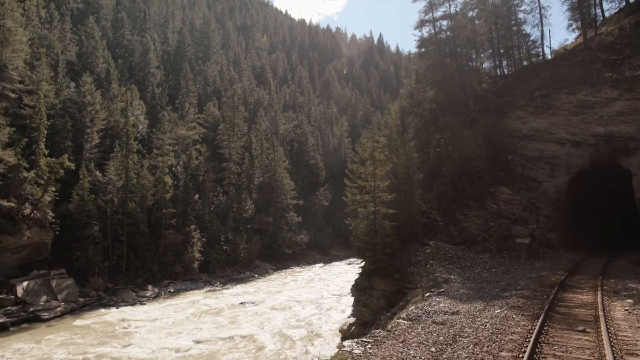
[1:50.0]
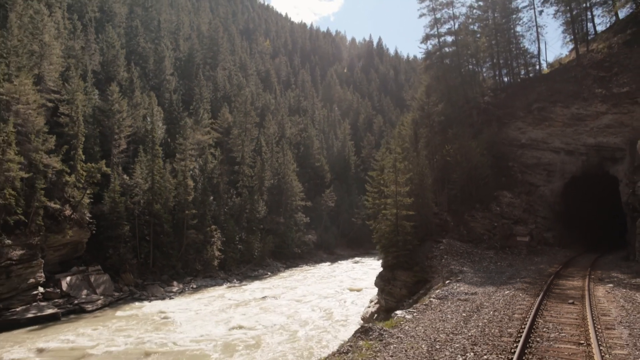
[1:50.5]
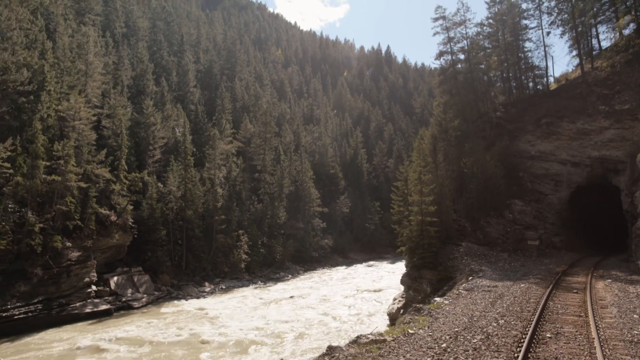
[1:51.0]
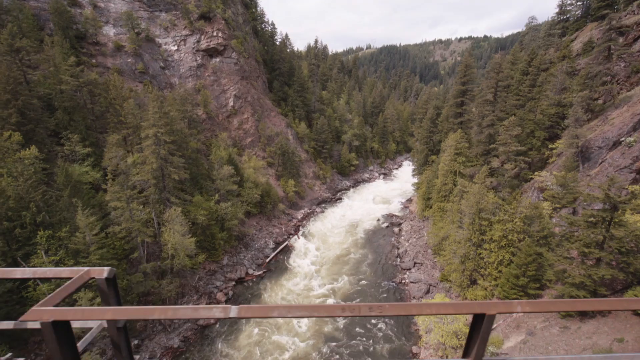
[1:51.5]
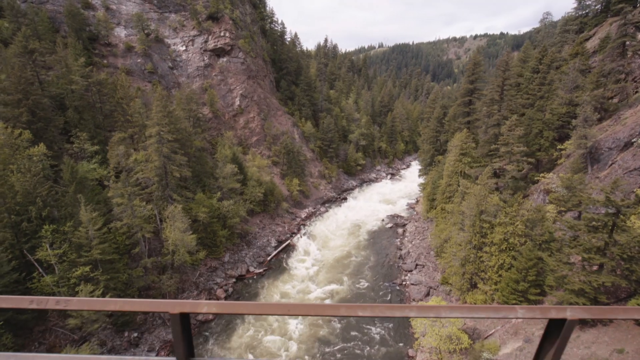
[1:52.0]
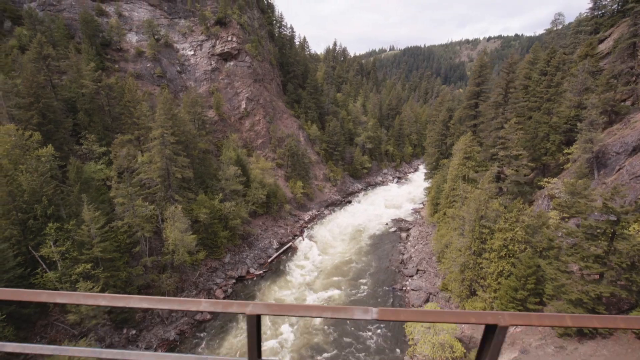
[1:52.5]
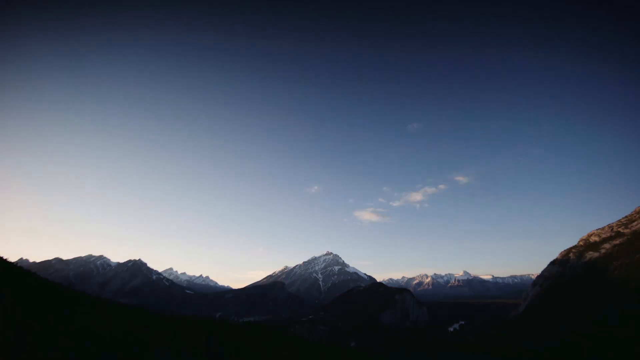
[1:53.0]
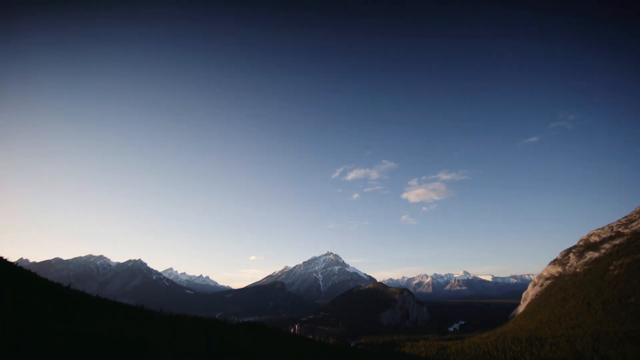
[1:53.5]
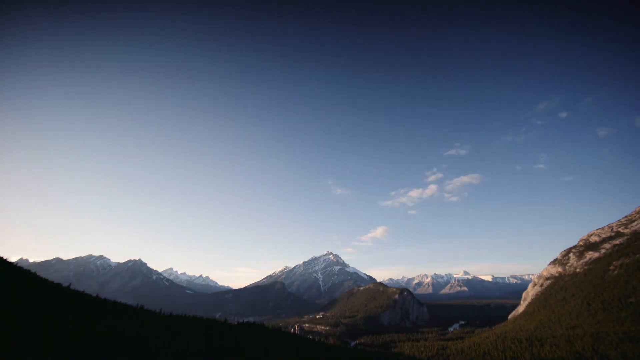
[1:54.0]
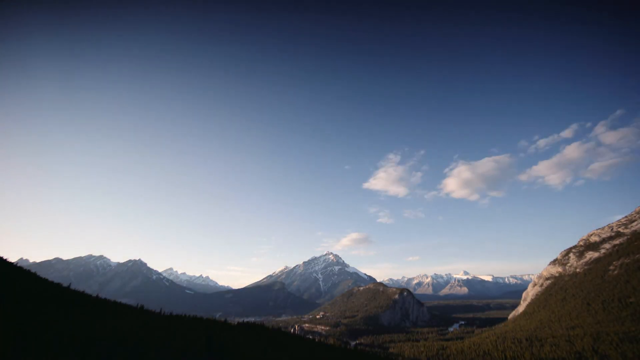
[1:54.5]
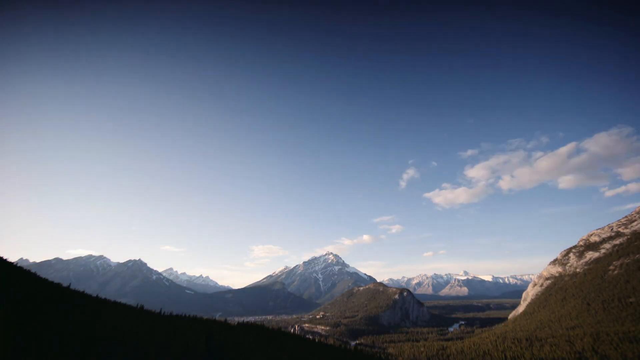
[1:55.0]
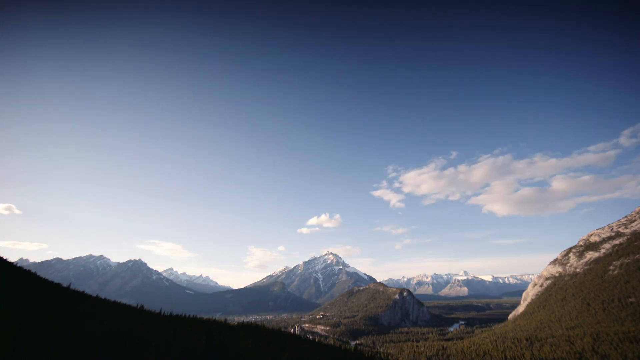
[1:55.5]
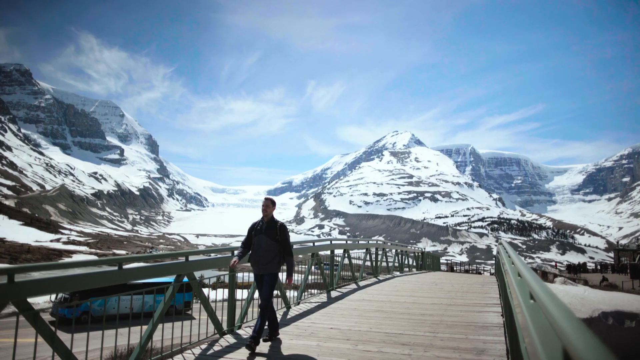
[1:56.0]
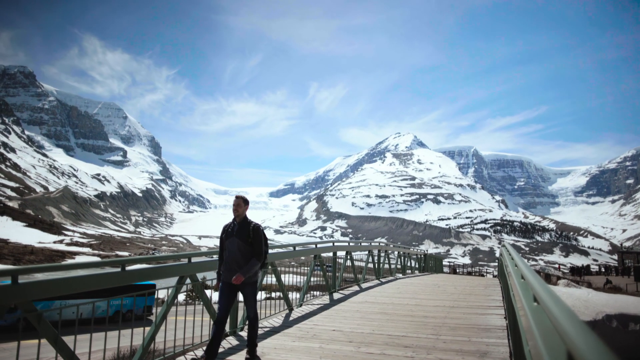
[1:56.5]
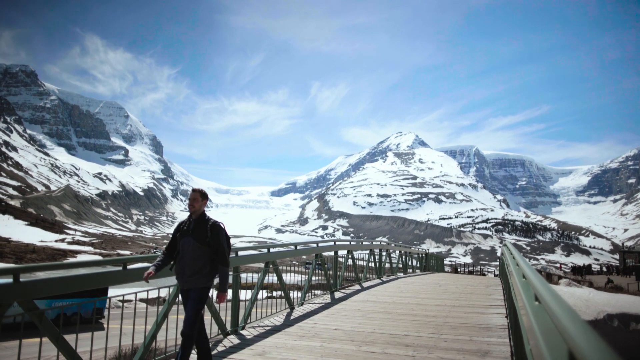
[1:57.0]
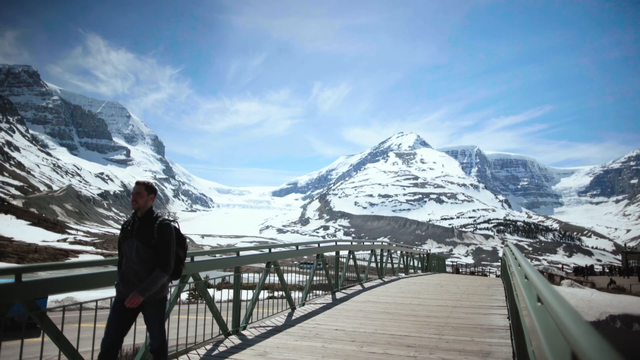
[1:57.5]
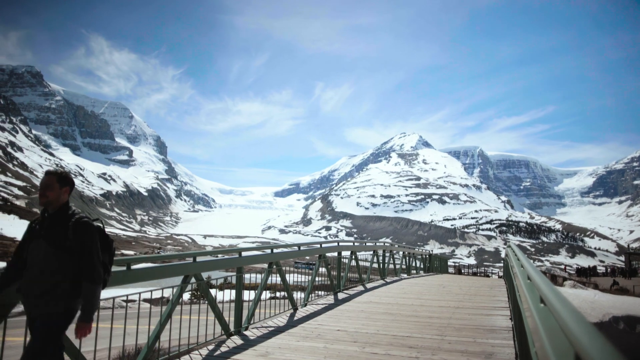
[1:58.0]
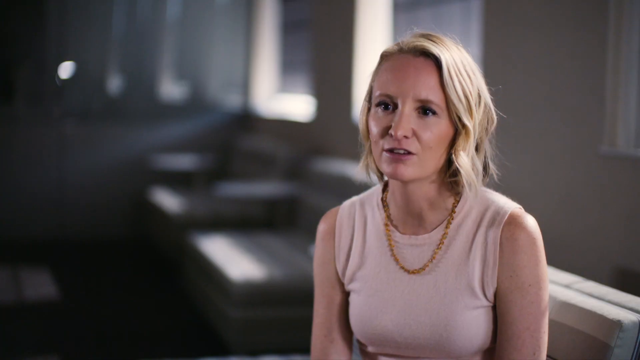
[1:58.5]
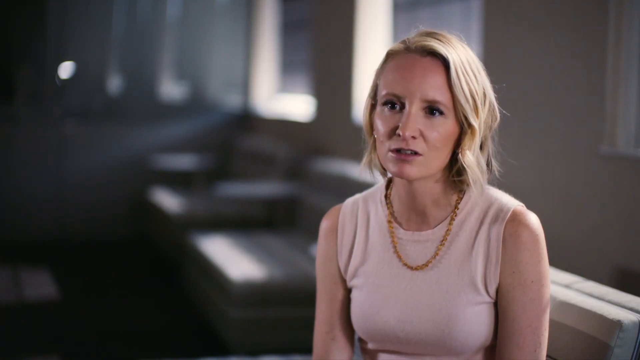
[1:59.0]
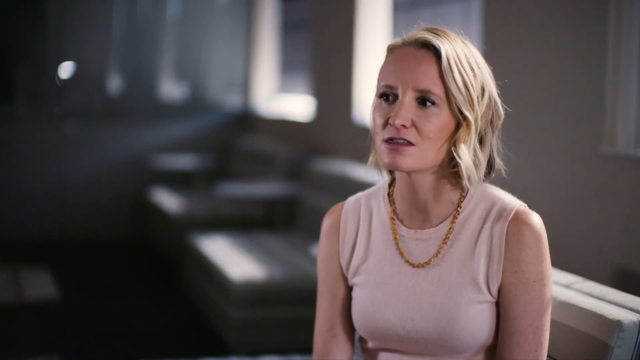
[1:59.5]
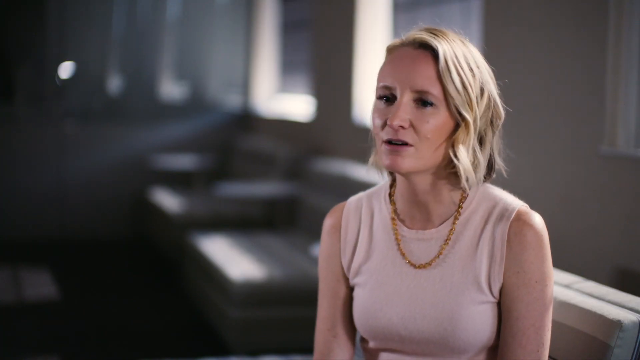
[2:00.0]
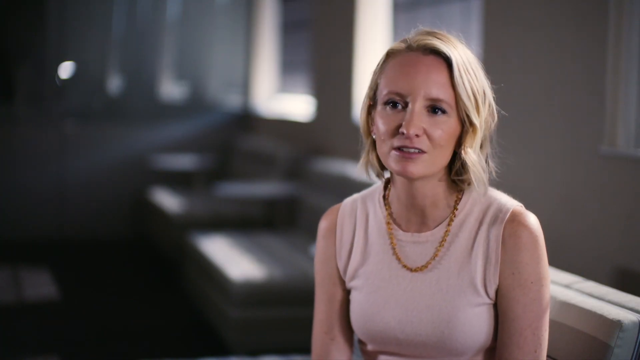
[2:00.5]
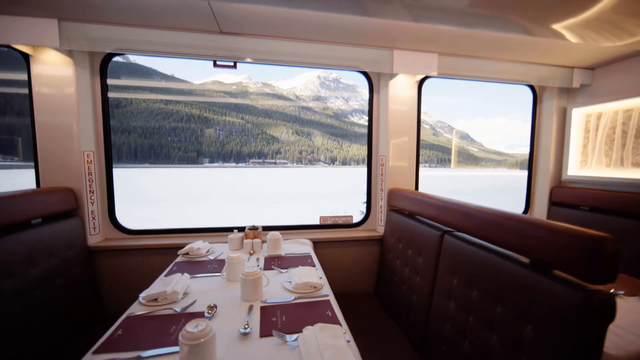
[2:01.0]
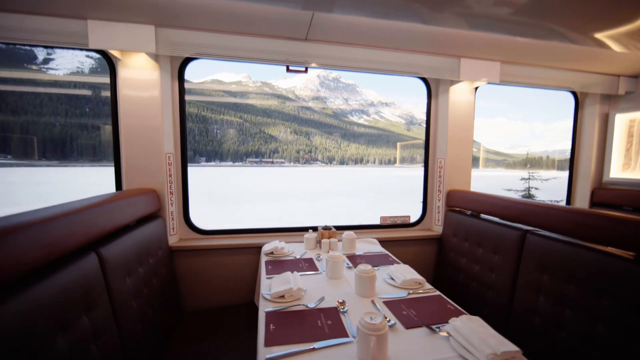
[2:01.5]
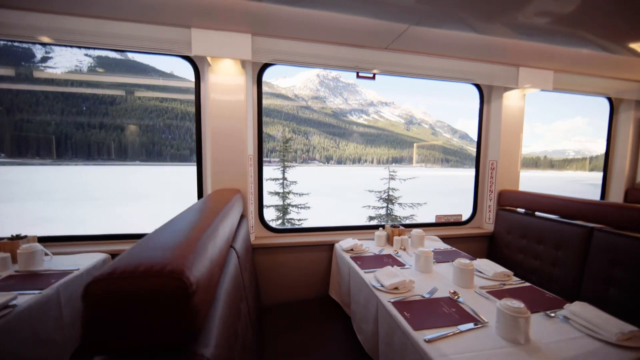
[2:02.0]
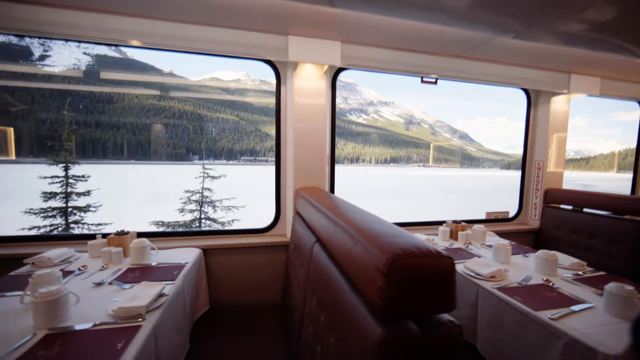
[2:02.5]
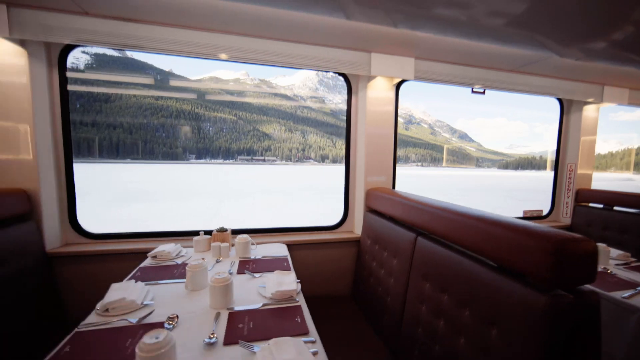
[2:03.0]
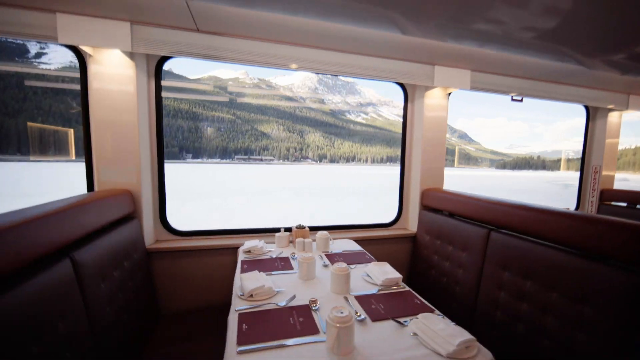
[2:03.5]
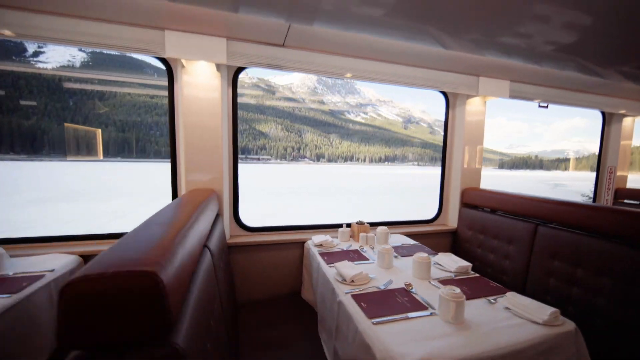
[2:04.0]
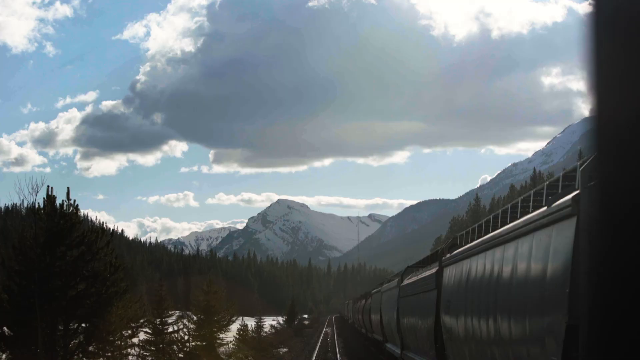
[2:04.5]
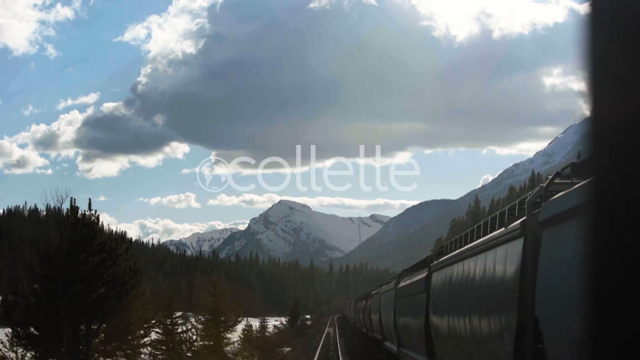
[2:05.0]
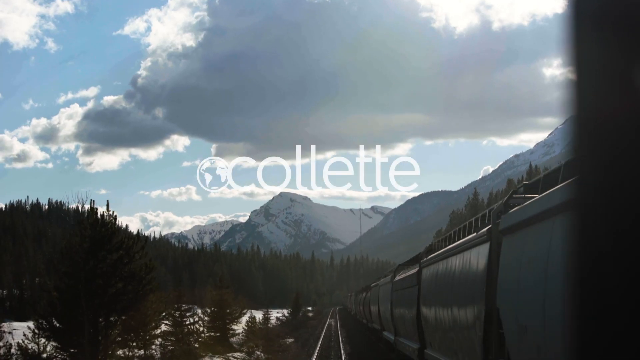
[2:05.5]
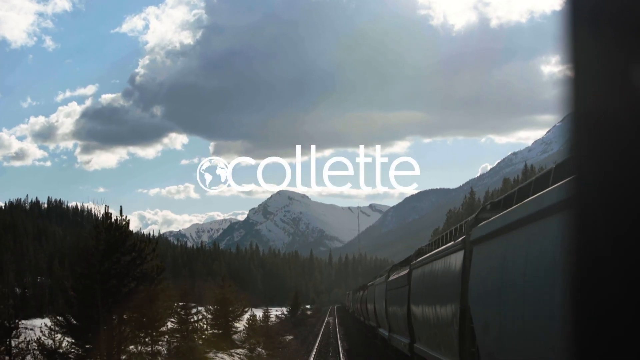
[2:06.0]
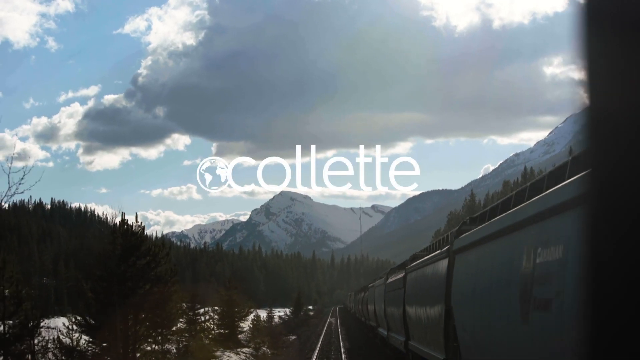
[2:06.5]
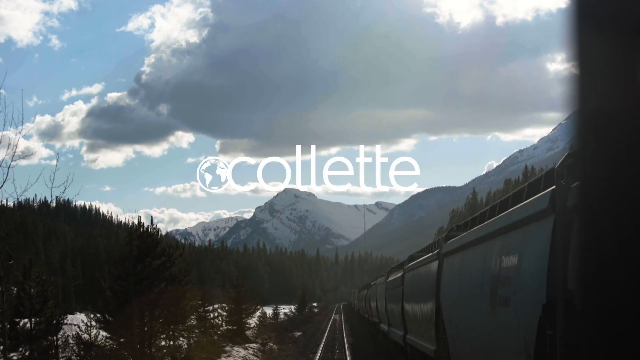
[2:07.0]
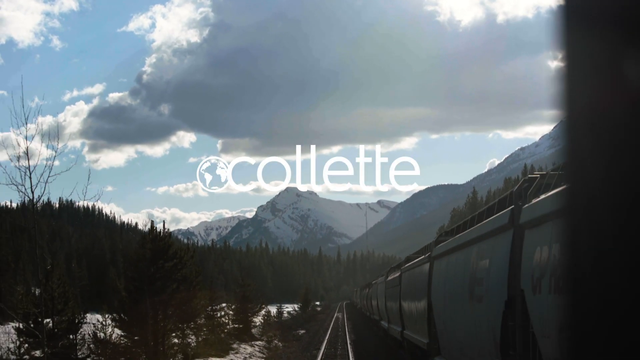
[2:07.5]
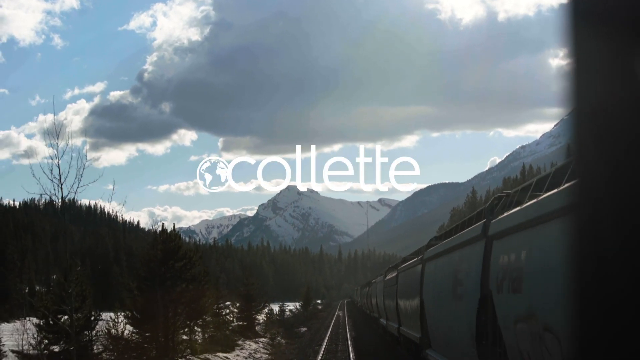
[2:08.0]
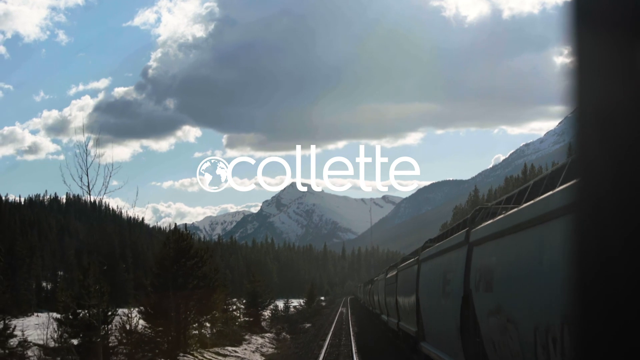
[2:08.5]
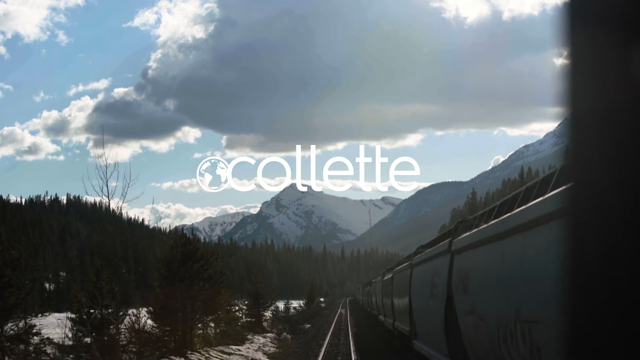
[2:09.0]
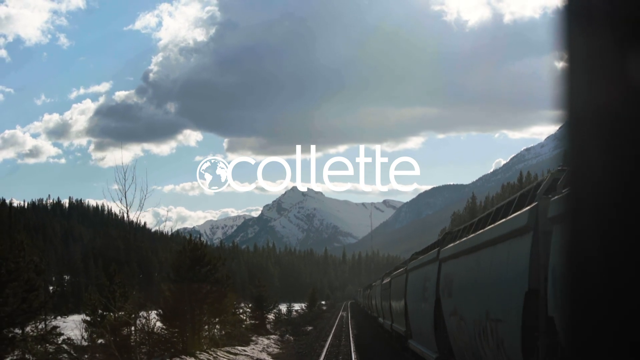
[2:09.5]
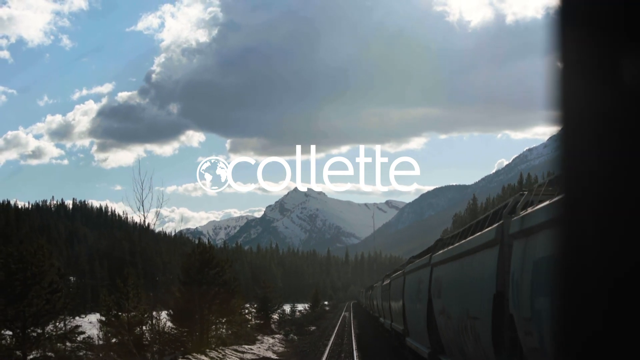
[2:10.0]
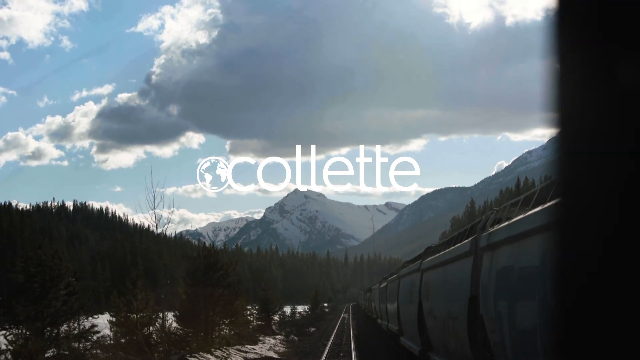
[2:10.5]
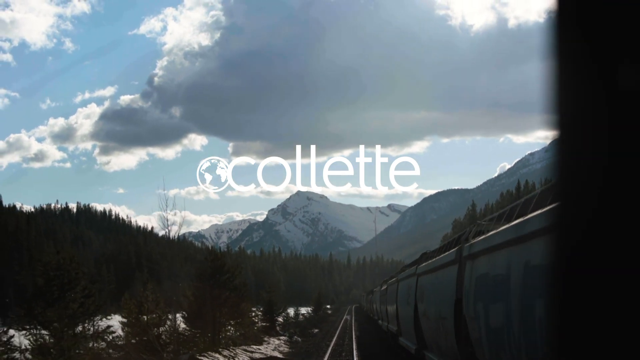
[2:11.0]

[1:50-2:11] Outdoors, there are a bunch of very tall, skinny evergreen trees, with a rushing river below moving so fast that white caps are visible on it. The camera starts to go down the river, then quickly switches to a high view, where the camera looks like it may be on a vehicle driving across a bridge. Below is an overview of the same fast-moving river with a lot of white caps, surrounded by tall evergreen trees and rocks. A completely different shot follows, with a blue sky and mountains, looking like it may be sunset or sunrise; it looks like a time lapse, with the clouds changing and forming very fast. In the final shot, a man walks across a wide bridge outdoors, with really tall, snow-covered mountains in the distance under a blue sky, and then walks out of the frame.